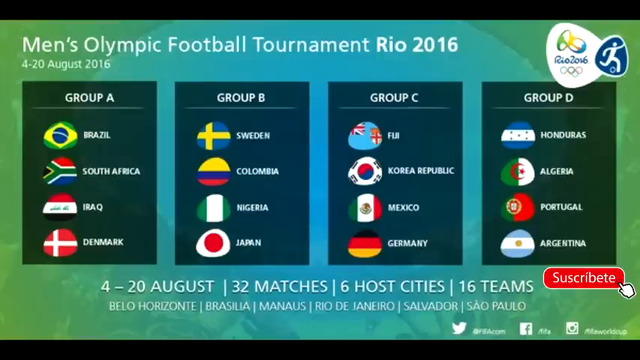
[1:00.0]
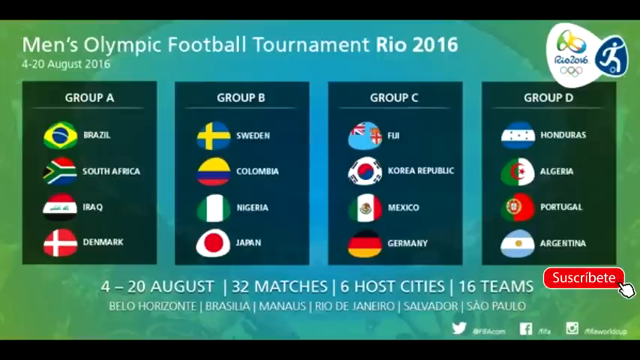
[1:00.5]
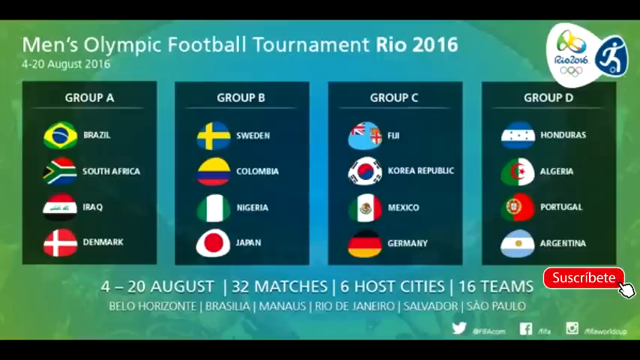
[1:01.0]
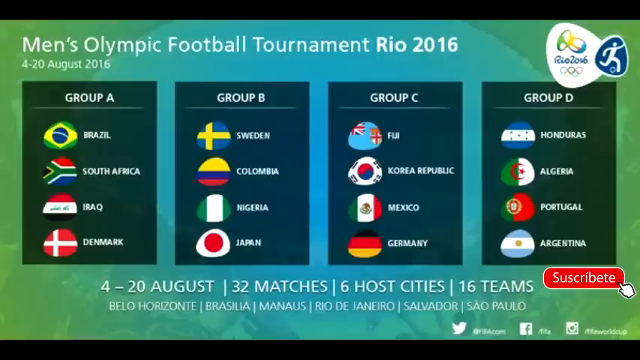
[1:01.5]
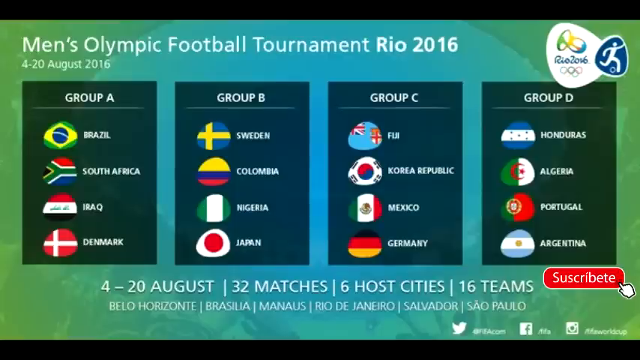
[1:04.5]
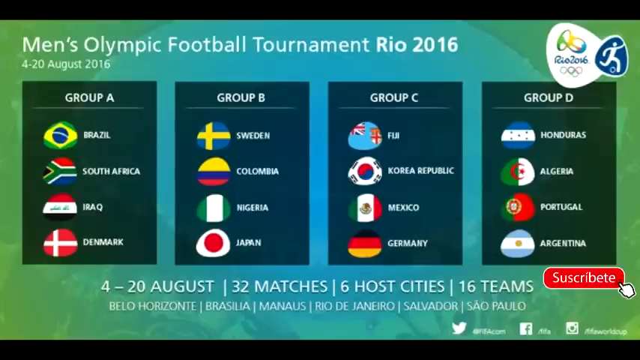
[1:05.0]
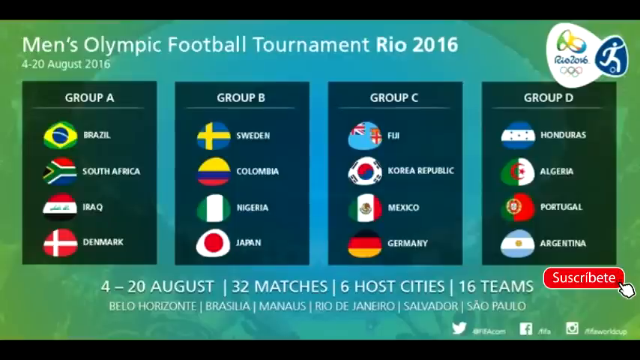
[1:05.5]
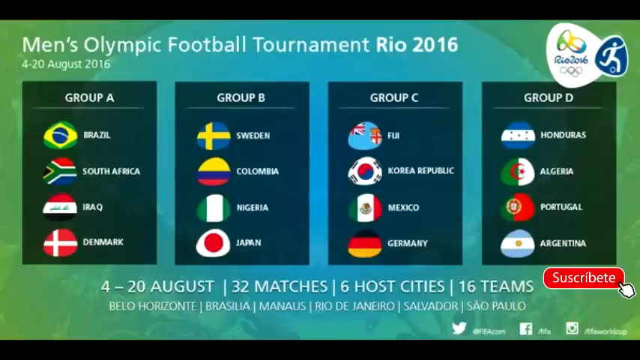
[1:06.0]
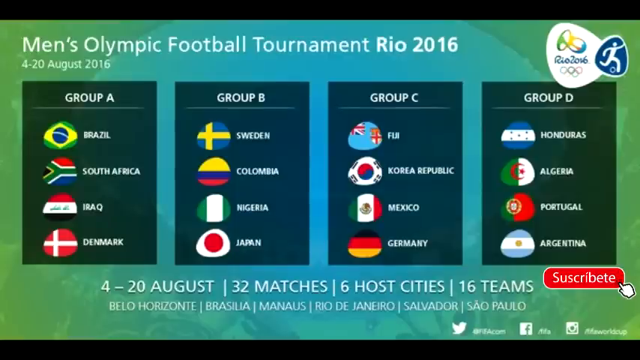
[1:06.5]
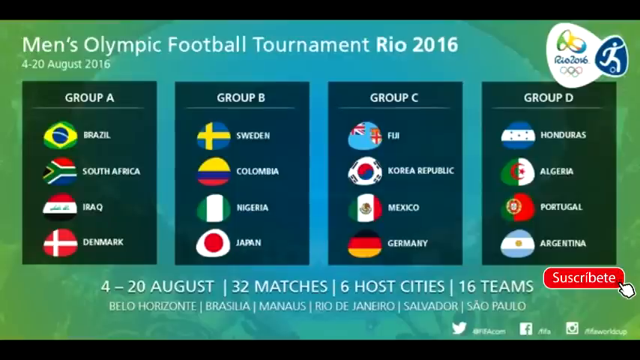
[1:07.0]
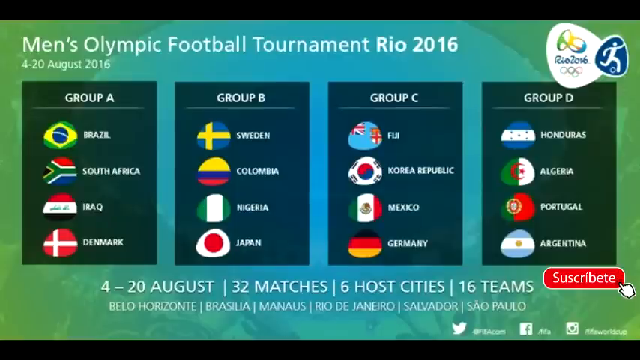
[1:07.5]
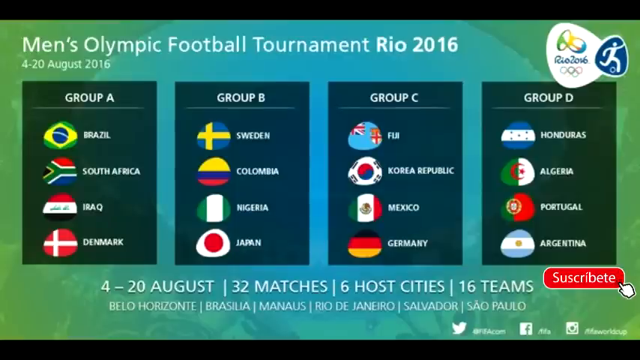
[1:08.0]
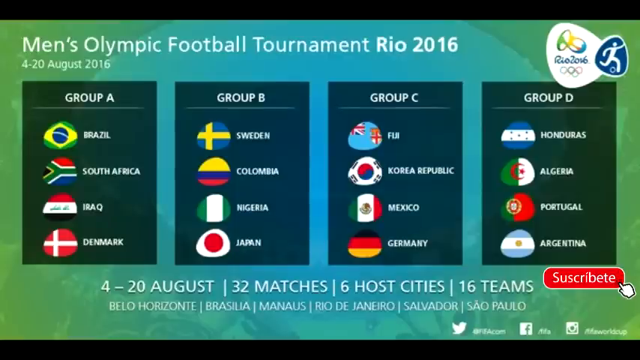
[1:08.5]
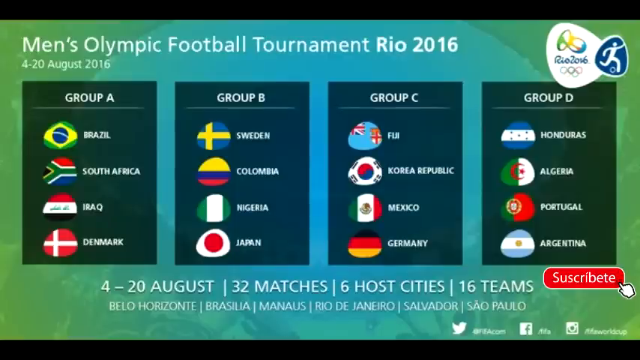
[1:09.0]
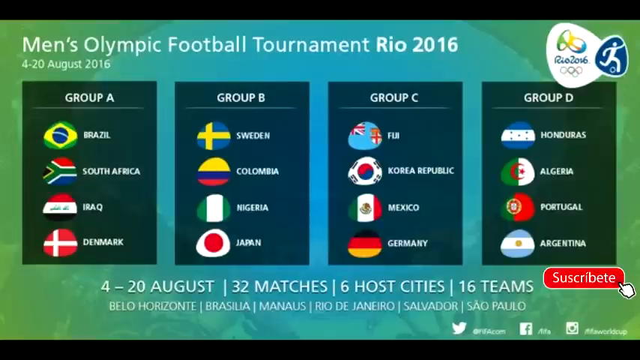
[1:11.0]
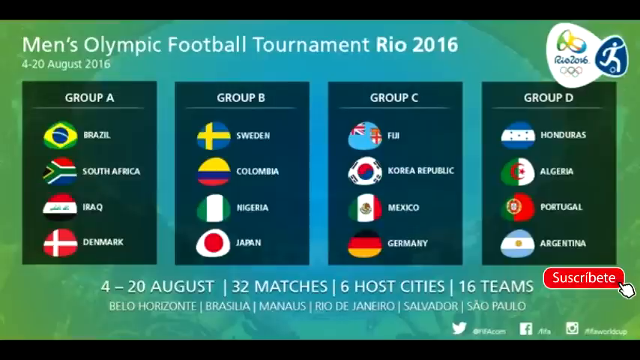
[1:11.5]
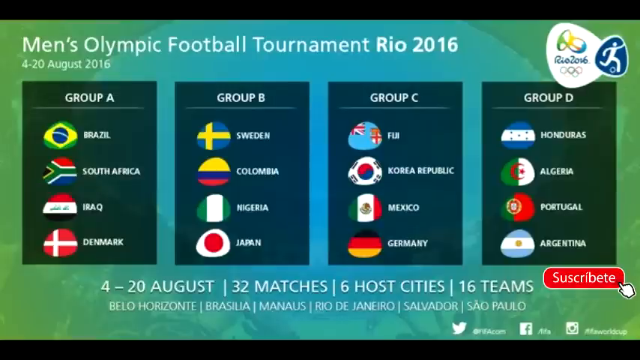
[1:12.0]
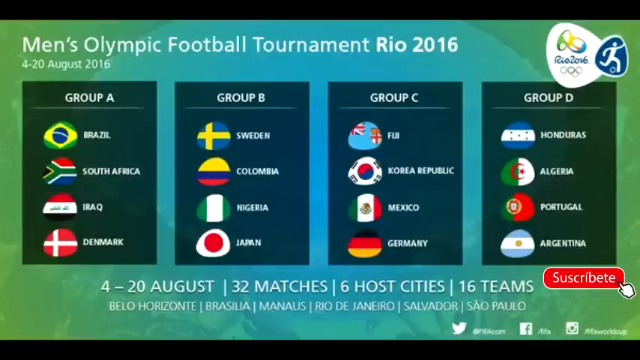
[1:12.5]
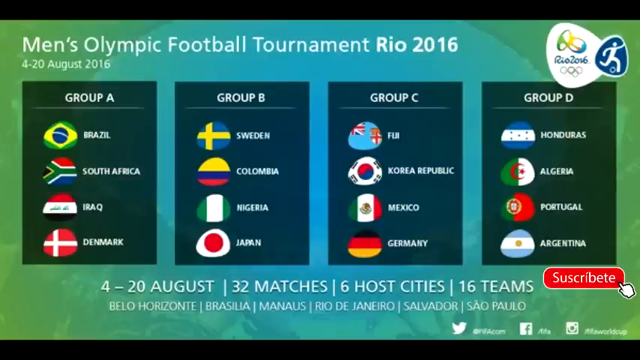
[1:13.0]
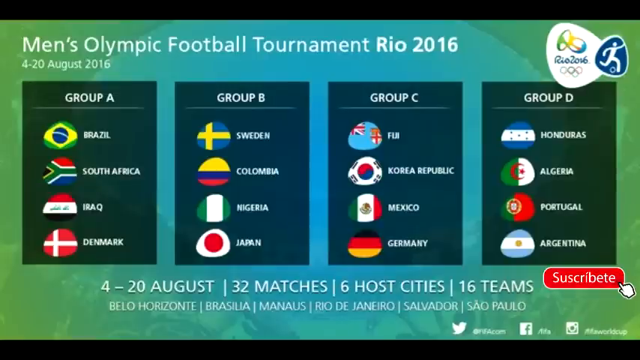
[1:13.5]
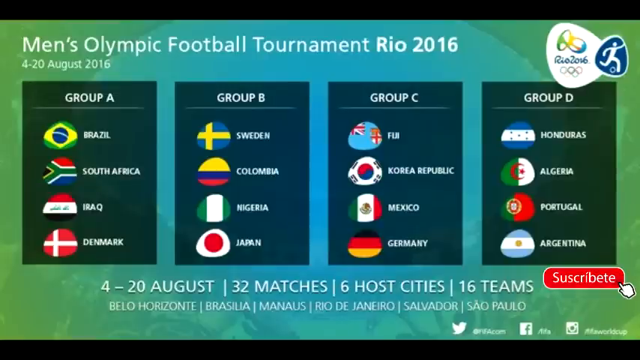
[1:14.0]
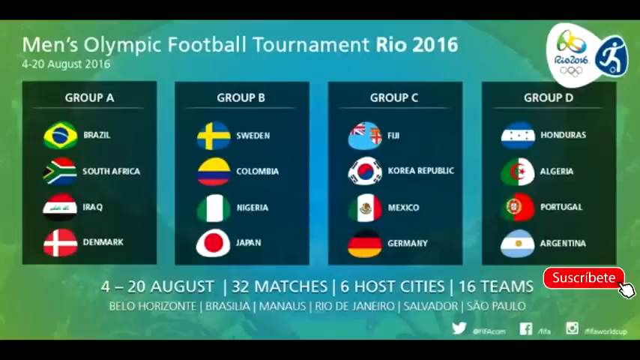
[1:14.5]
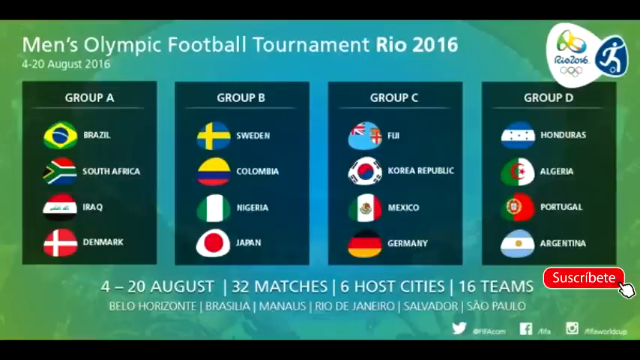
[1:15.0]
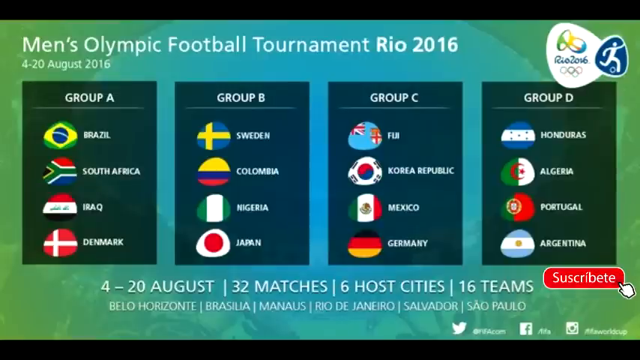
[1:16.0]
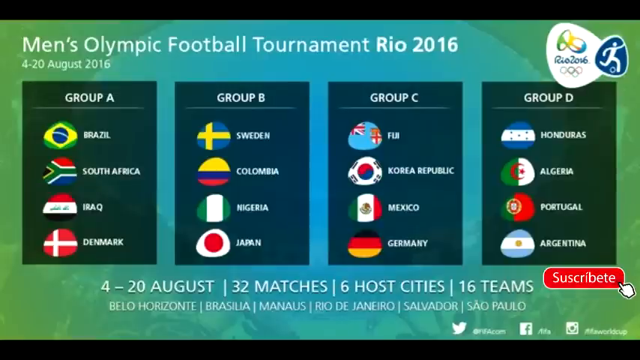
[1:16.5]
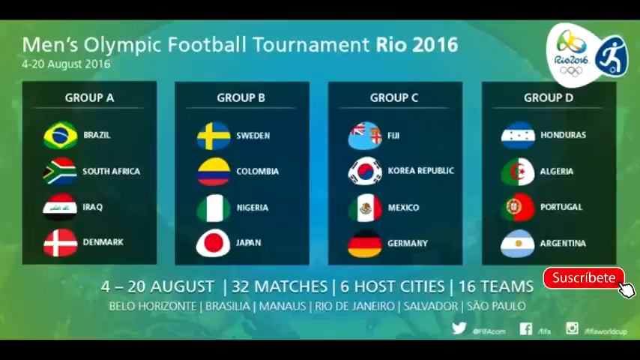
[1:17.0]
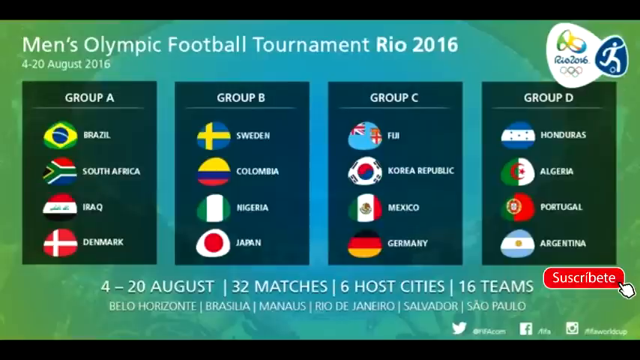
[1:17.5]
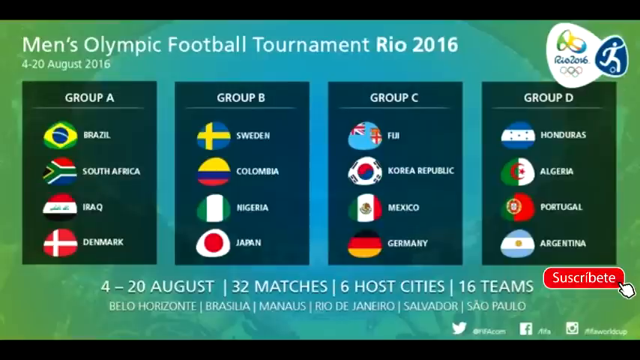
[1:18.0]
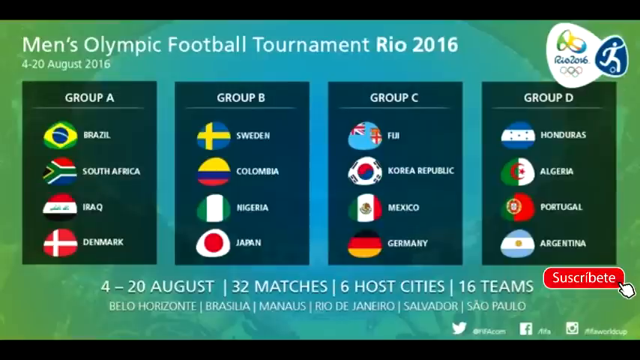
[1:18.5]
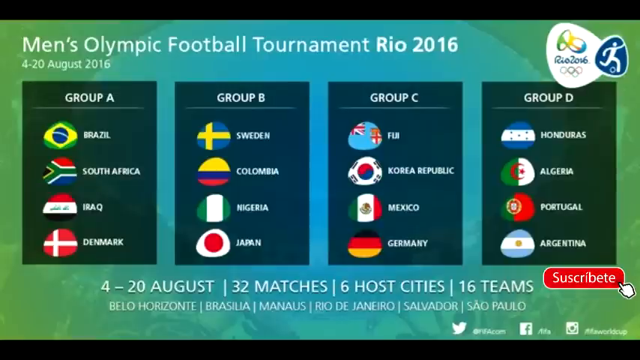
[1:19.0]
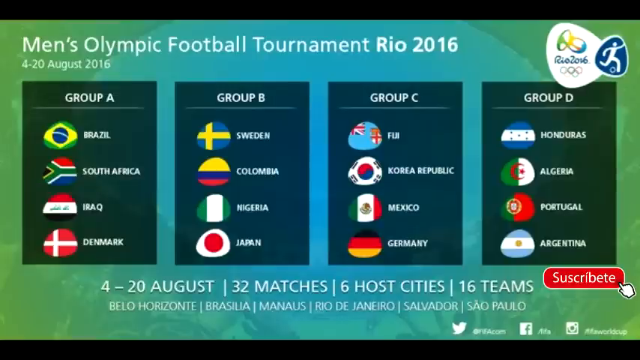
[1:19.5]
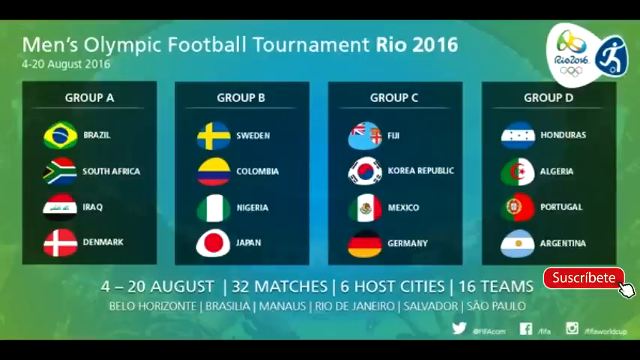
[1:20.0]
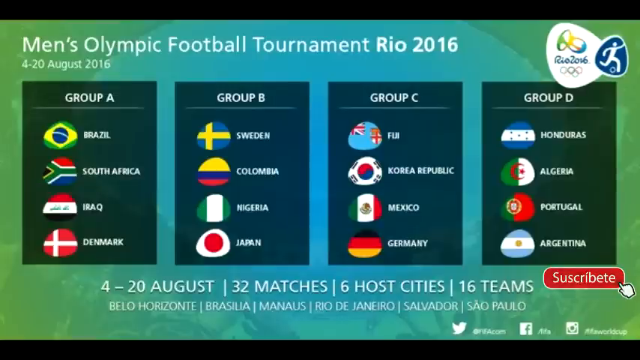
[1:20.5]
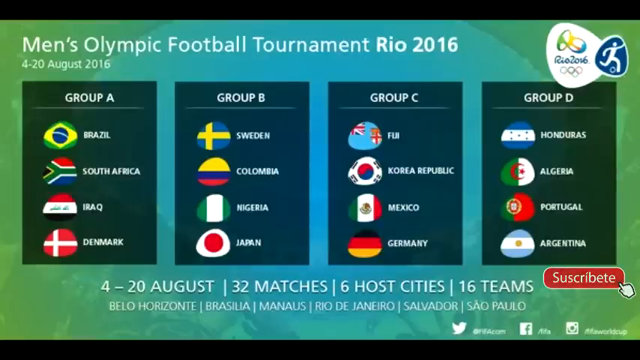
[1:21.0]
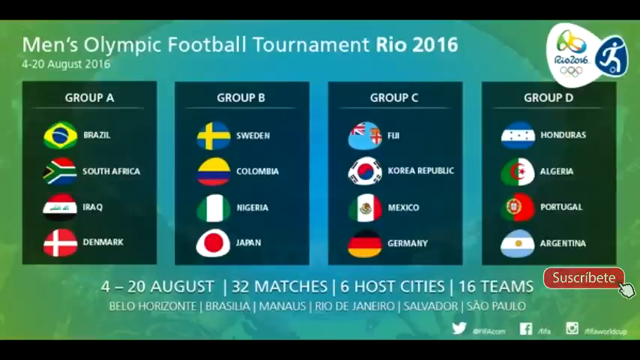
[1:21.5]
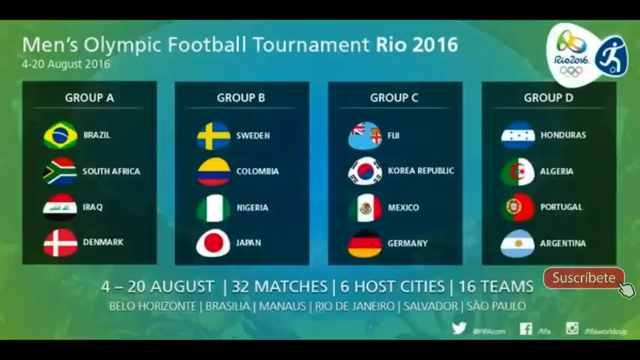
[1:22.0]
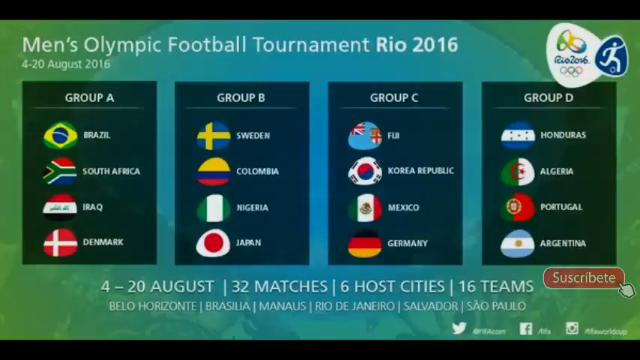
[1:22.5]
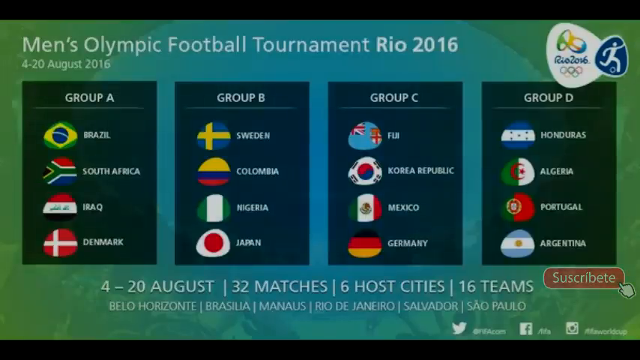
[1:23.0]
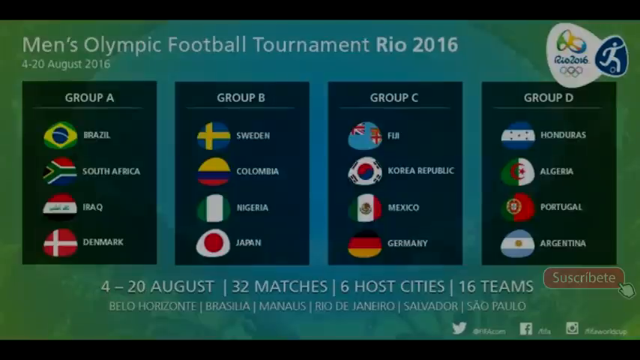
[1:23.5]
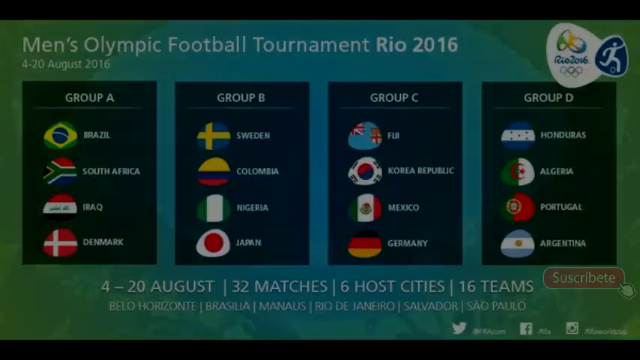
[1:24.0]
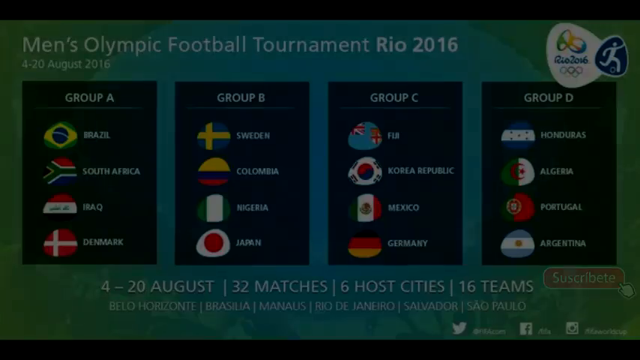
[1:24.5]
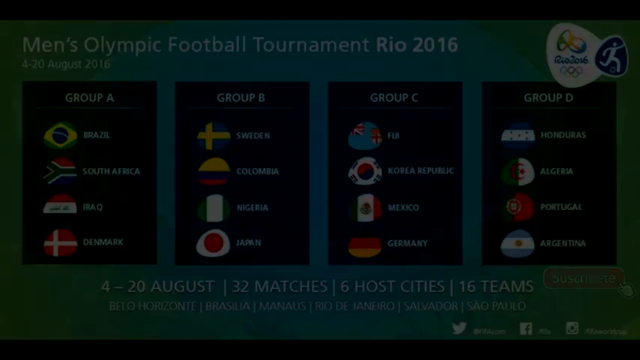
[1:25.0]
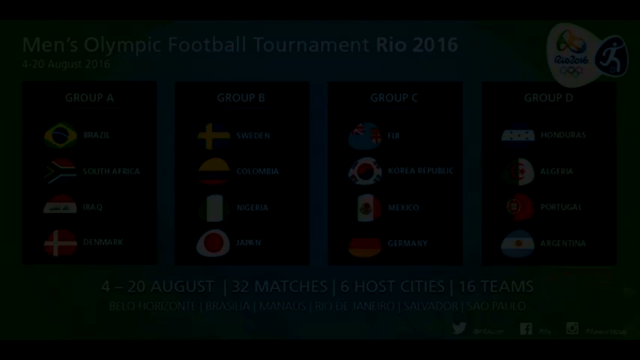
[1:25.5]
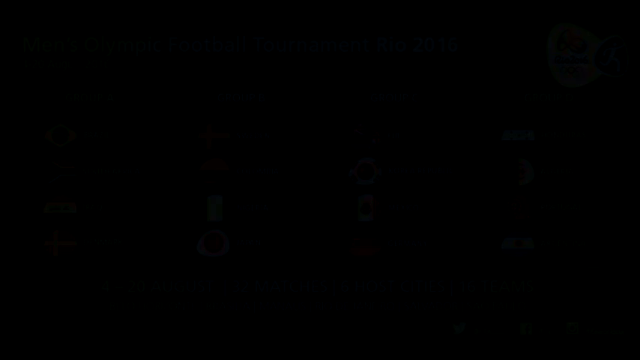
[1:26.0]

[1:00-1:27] The chart reads "the men's Olympic football tournament, Rio 2016", with dates from August 4th to the 20th, 32 matches, six host cities and 16 teams. Group A is Brazil, South Africa, Iraq and Denmark; Group B is Sweden, Colombia, Nigeria and Japan; Group C is Fiji, Korea Republic, Mexico and Germany; Group D is Honduras, Algeria, Portugal and Argentina. The background is bluish-greenish, with green on the sides and blue more in the middle. The host cities are listed as Belo Horizonte, Brasilia, Manas, Rio de Janeiro, Salvador and Sao Paulo. Twitter and Facebook are visible, along with a third item that is unclear. The screen then fades out.